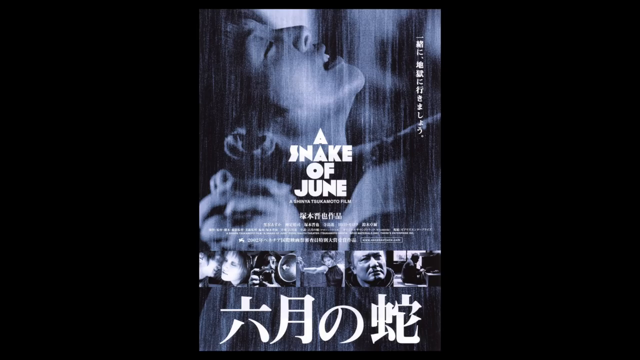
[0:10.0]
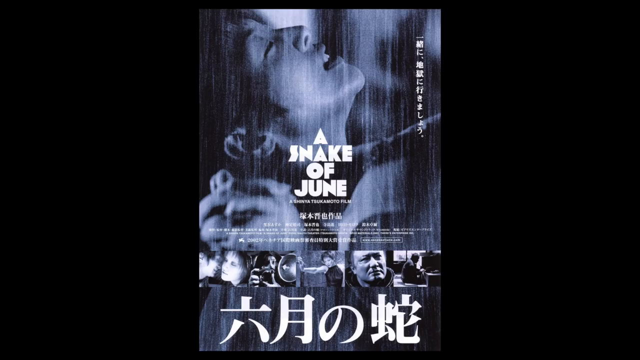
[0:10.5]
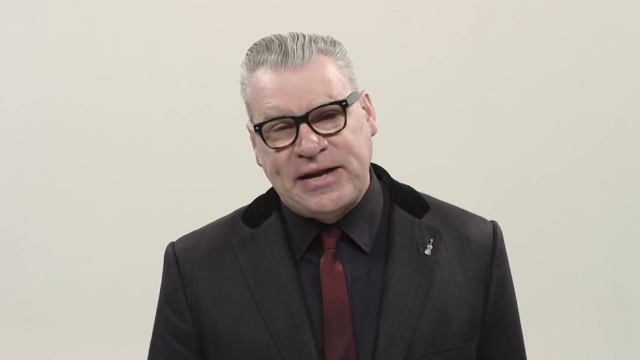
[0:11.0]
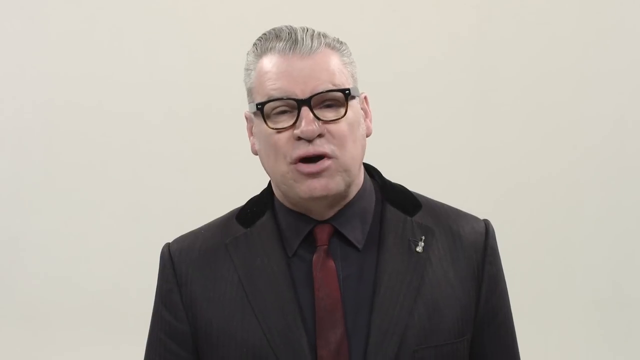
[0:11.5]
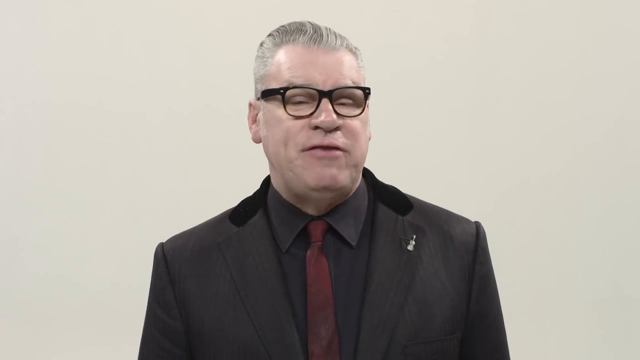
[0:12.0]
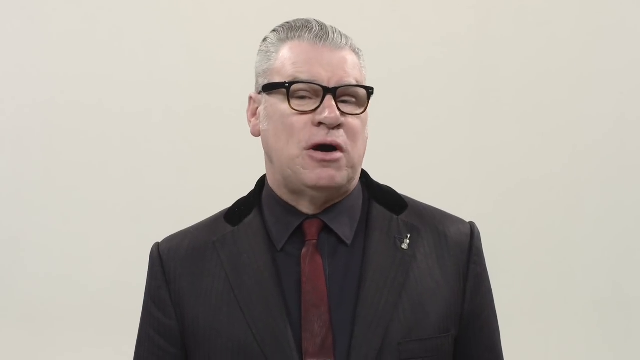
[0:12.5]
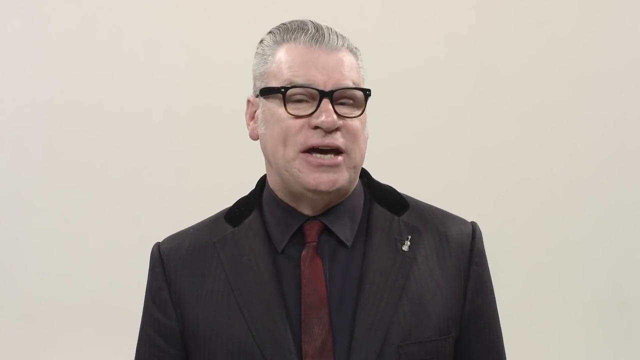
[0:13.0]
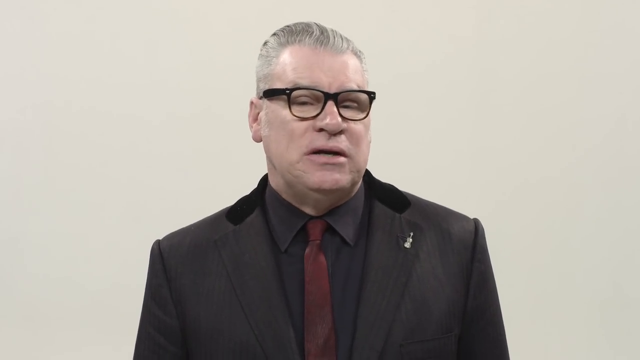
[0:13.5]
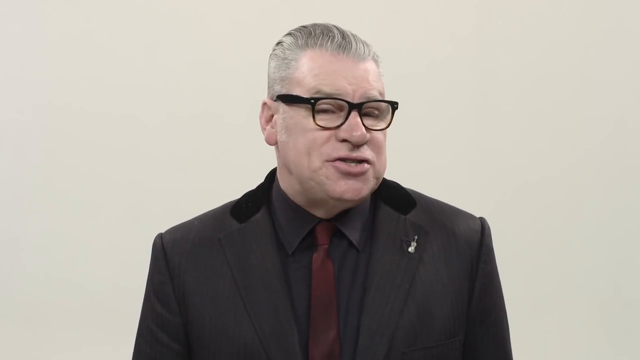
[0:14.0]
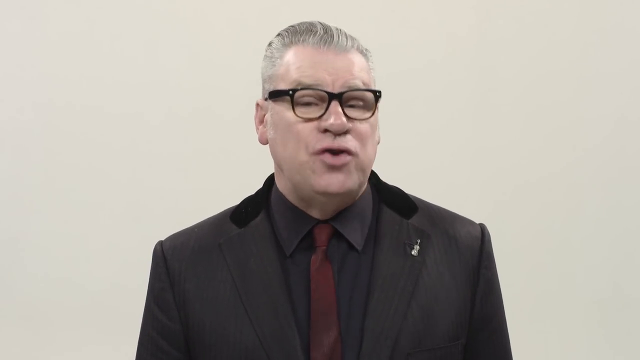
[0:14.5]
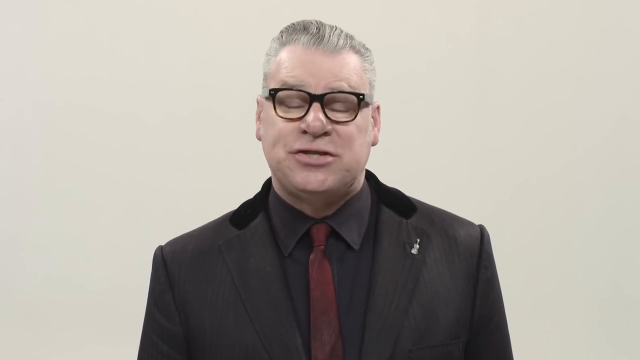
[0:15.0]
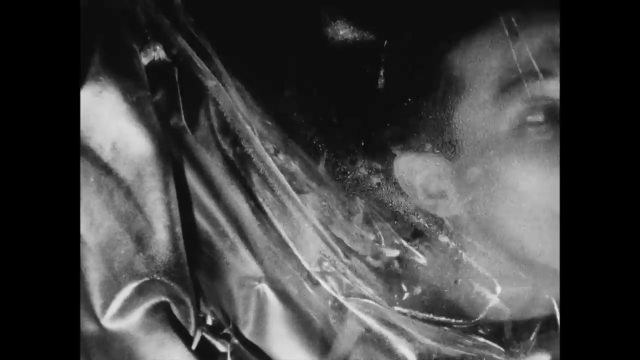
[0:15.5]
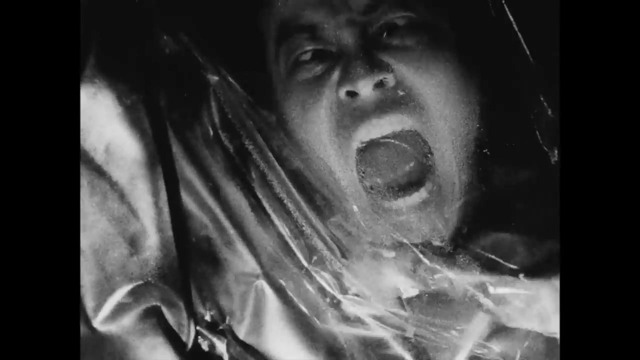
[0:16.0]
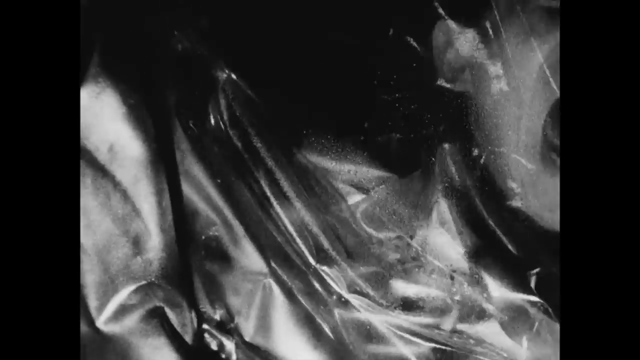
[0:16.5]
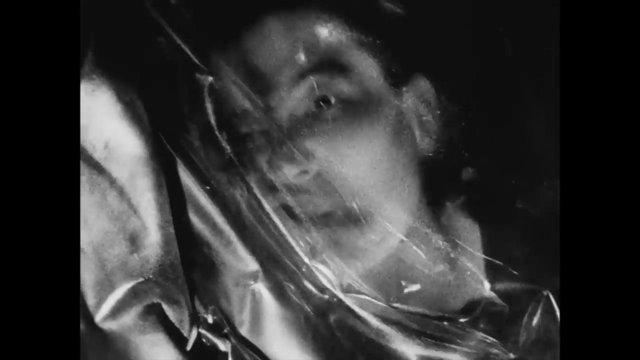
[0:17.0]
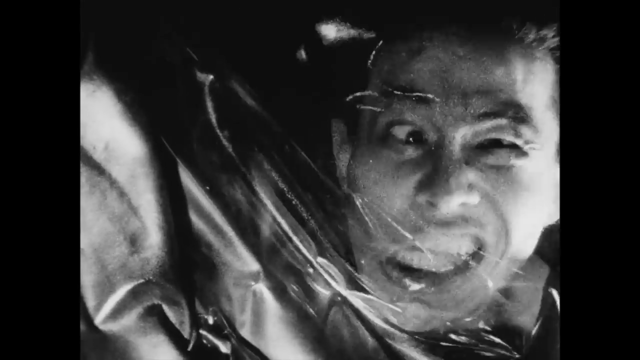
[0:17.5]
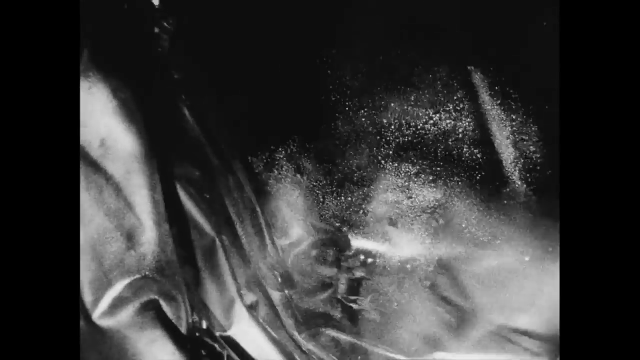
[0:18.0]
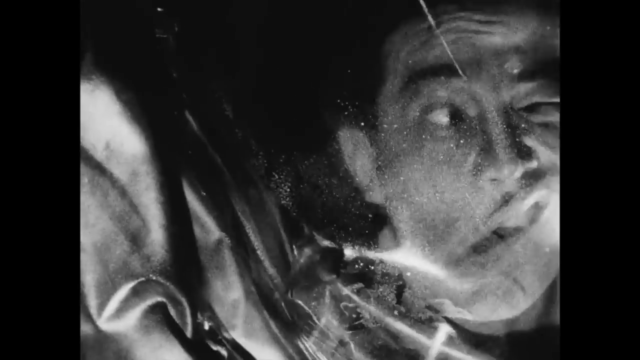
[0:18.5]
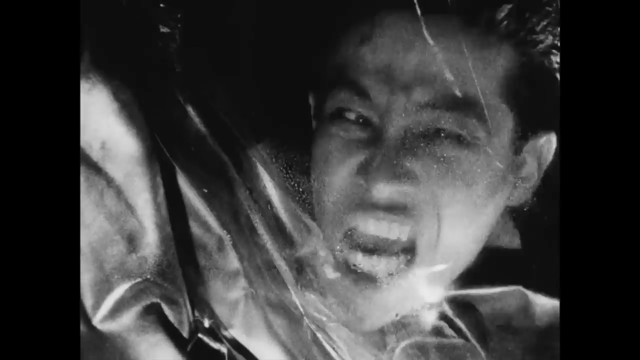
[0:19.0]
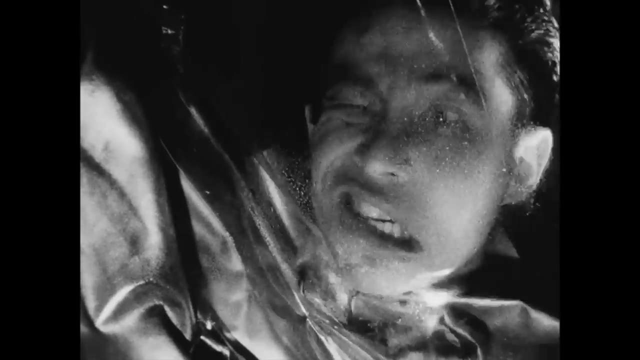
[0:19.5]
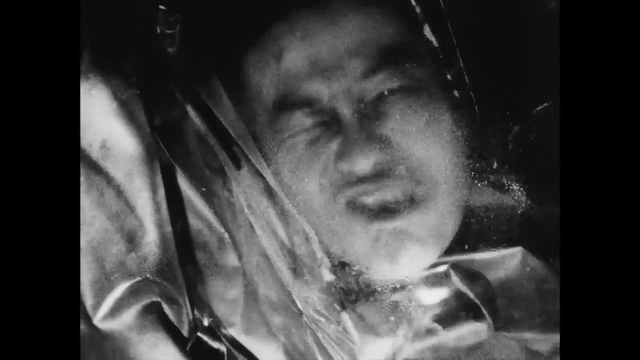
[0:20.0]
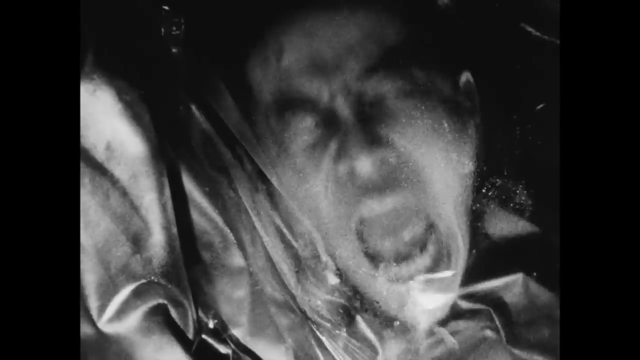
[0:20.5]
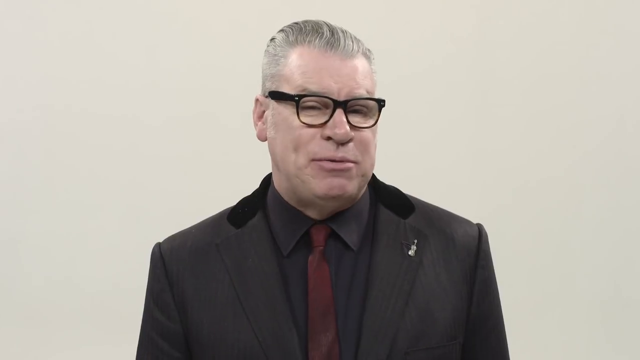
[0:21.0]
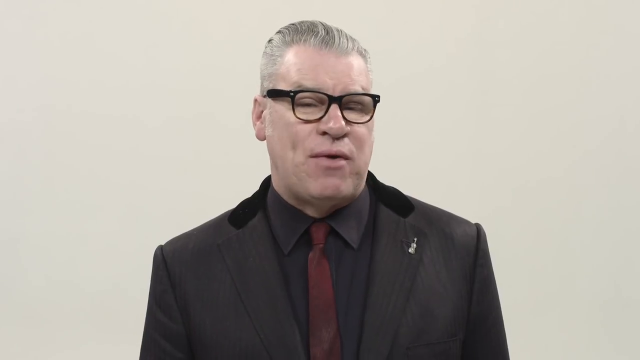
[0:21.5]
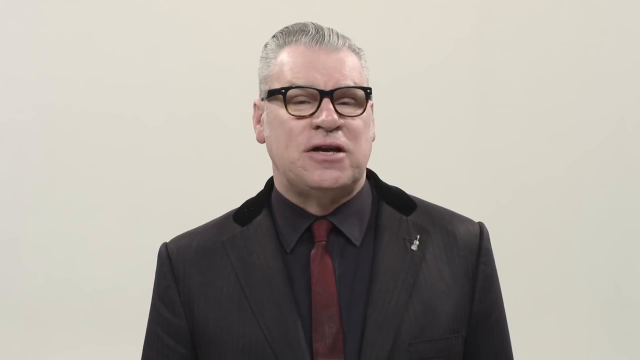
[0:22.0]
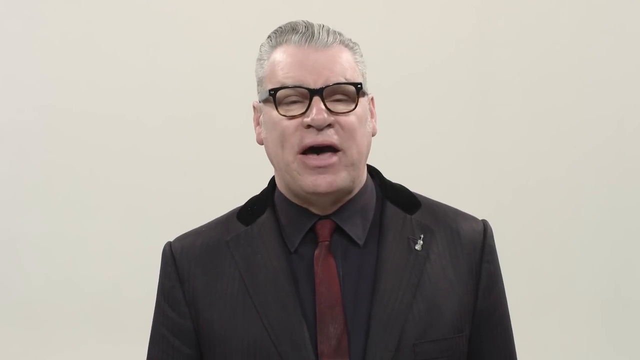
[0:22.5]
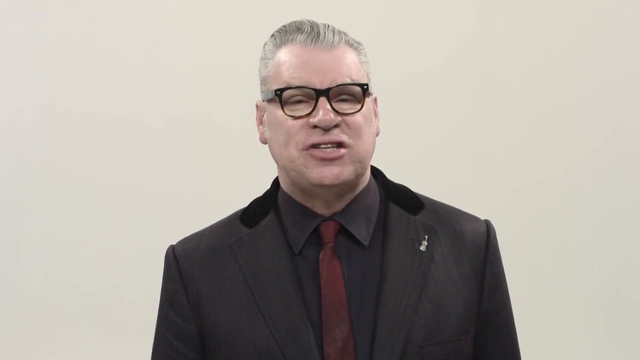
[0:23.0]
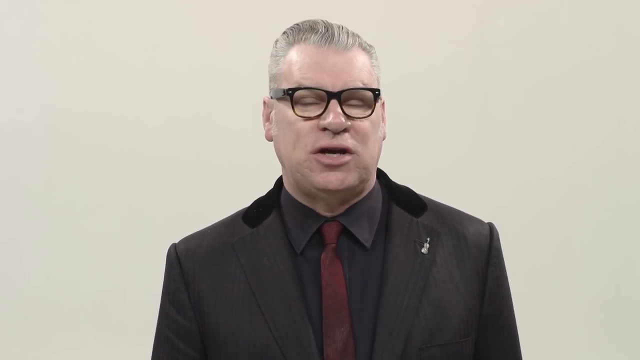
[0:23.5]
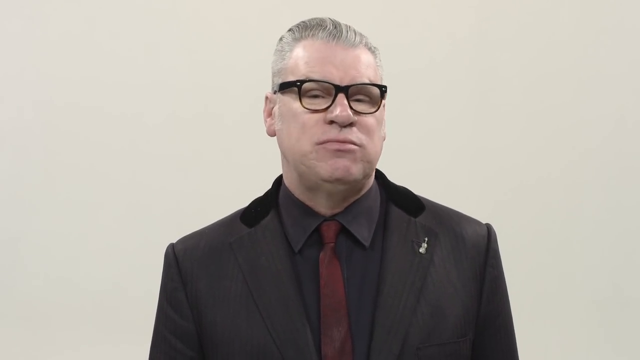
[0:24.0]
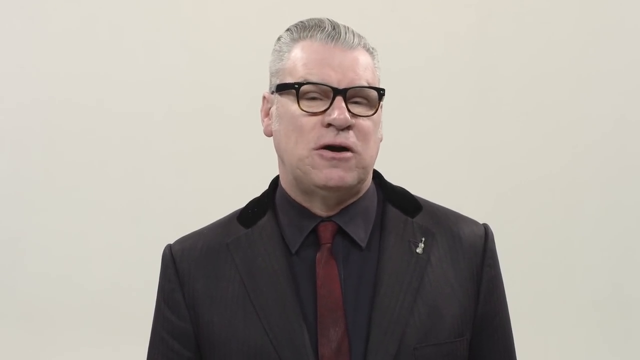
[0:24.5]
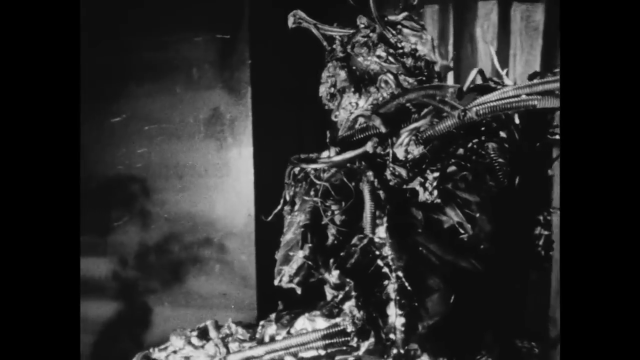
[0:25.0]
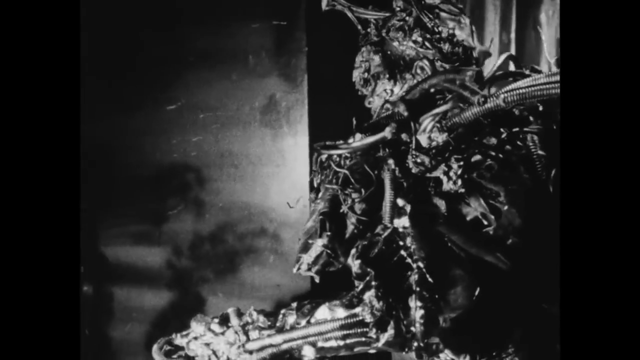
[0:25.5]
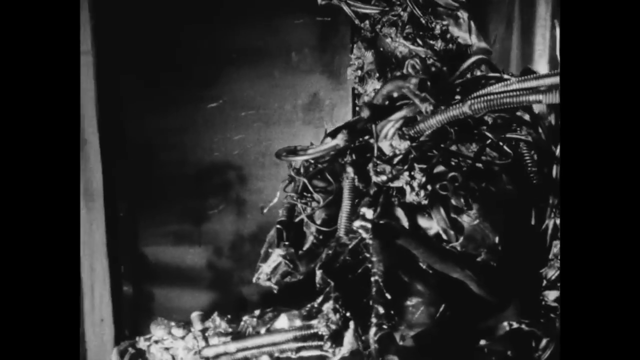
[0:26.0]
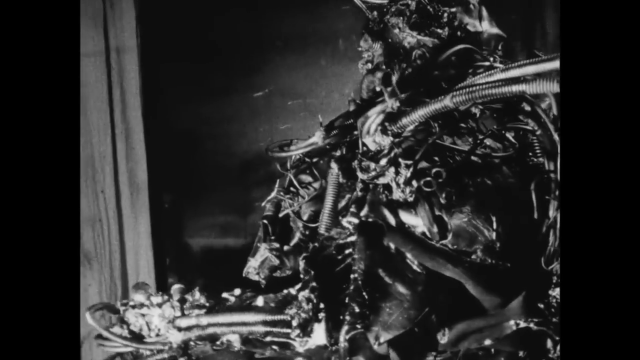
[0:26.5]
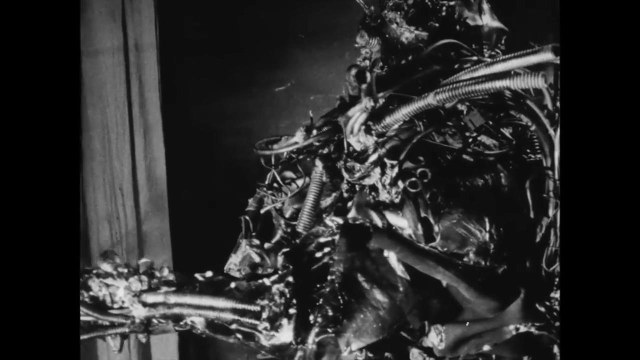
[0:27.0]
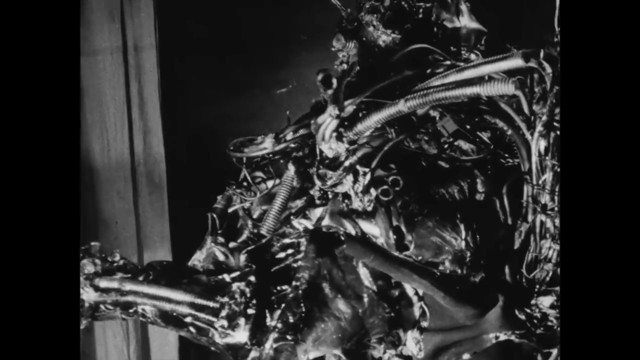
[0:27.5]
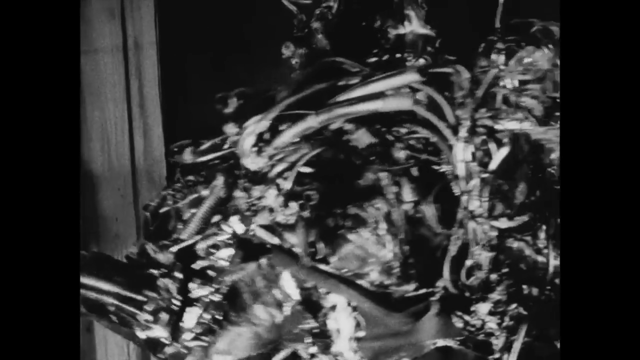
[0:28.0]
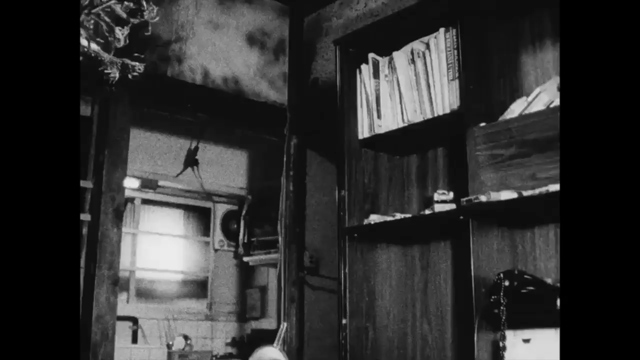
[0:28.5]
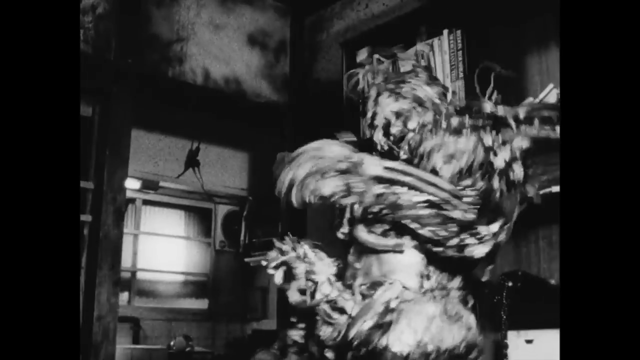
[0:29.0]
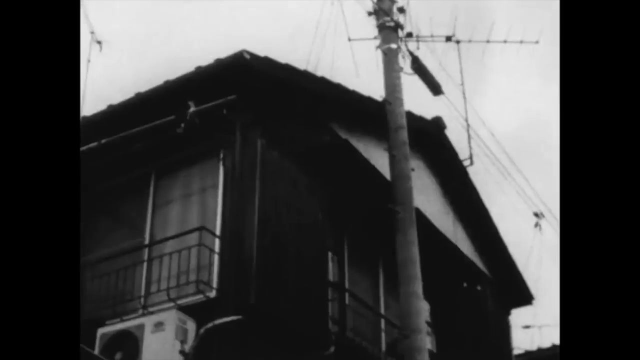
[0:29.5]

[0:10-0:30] The movie poster is for a film called "A Snake of June", its title in bold white capital letters. The background is a photograph that looks like a woman lying on her back, looking upward. The video returns to the man in the suit and glasses, who talks while looking directly at the camera; a decorative pin is visible on the left lapel of his jacket. Clips from a movie follow: what looks like a man's face trapped inside a plastic bag, his face going crazy, his mouth making all kinds of distorted shapes, his eyes crossing and his head jerking all over the place in very erratic movements. The man in the suit appears again, still standing in front of the white wall and speaking to the camera, seen from about the stomach up. Next, some kind of creature that looks like a robot is seen from its left side, raising its left hand and starting to walk forward; it turns out to be a man wearing some kind of robot suit.